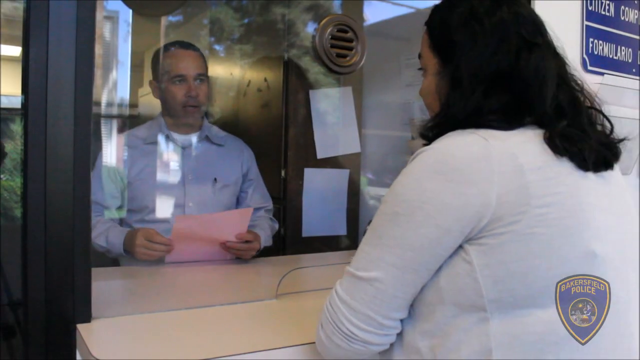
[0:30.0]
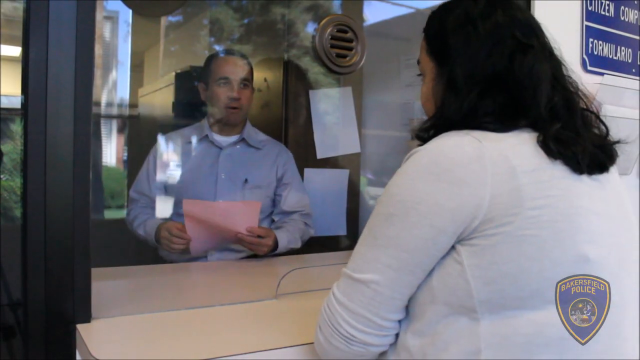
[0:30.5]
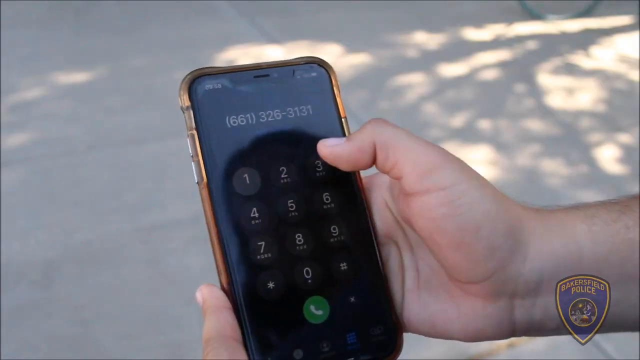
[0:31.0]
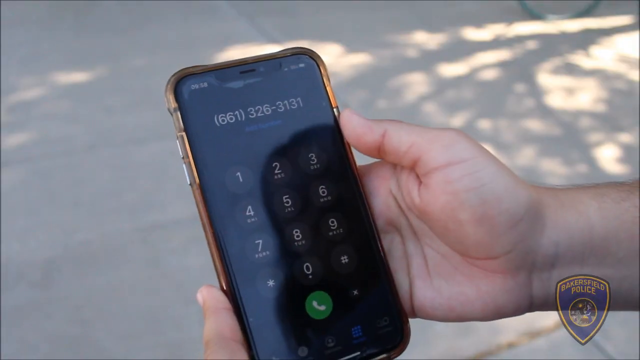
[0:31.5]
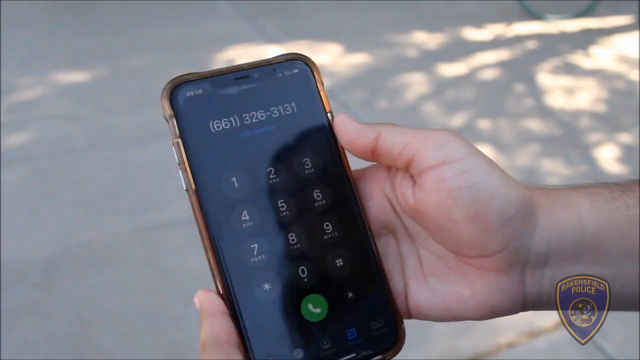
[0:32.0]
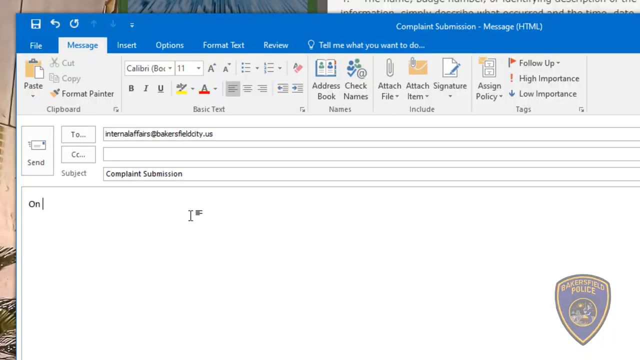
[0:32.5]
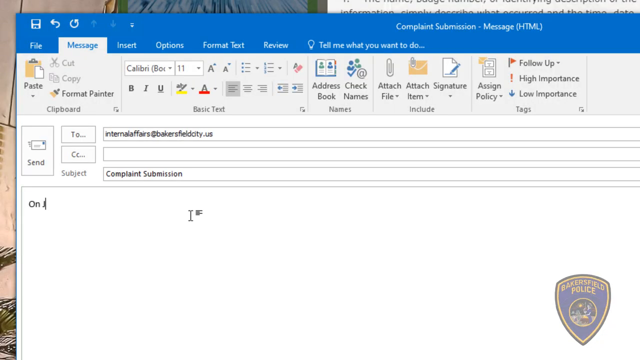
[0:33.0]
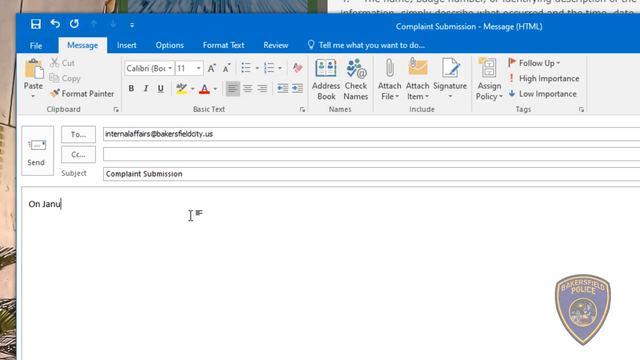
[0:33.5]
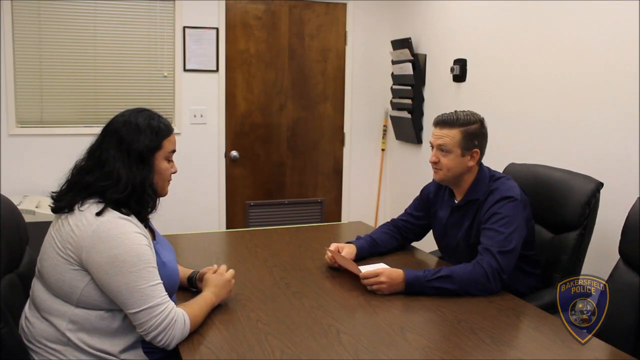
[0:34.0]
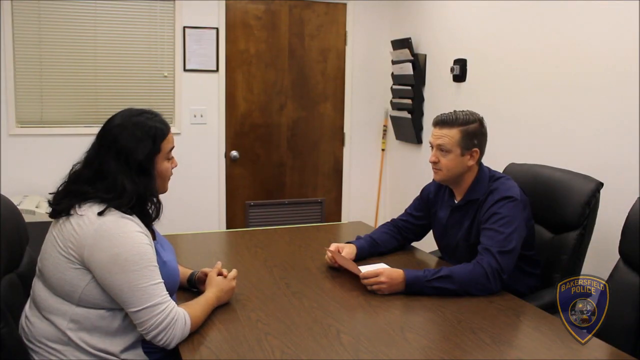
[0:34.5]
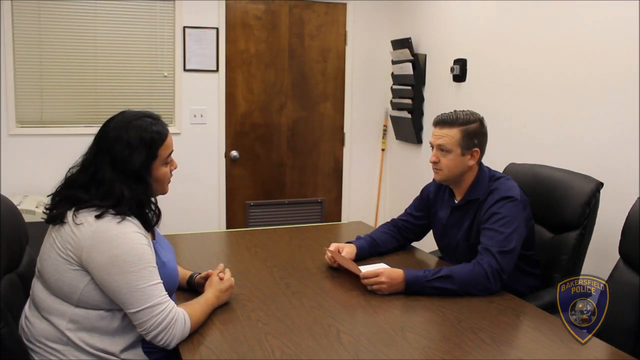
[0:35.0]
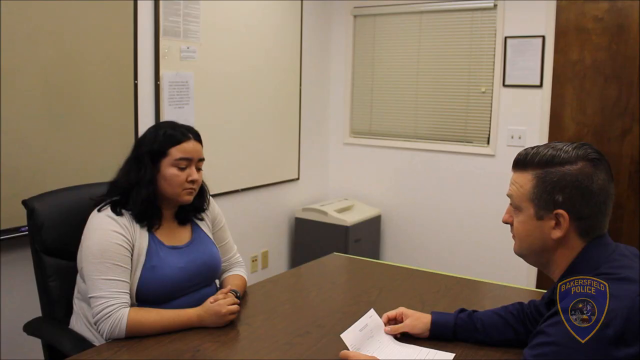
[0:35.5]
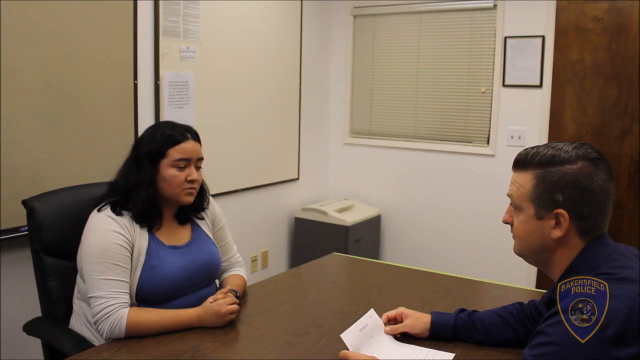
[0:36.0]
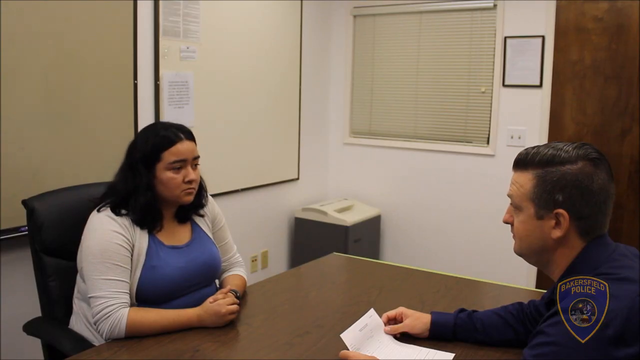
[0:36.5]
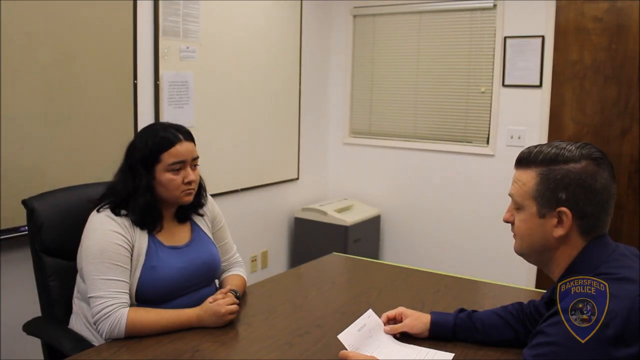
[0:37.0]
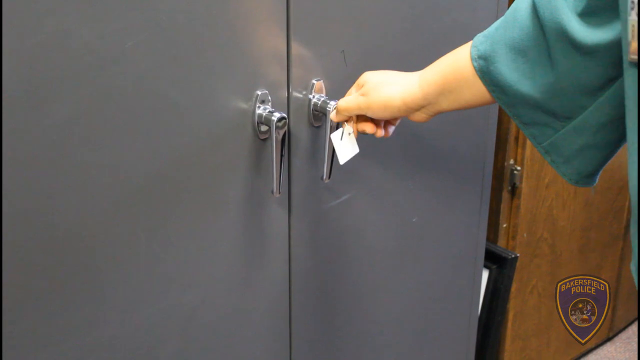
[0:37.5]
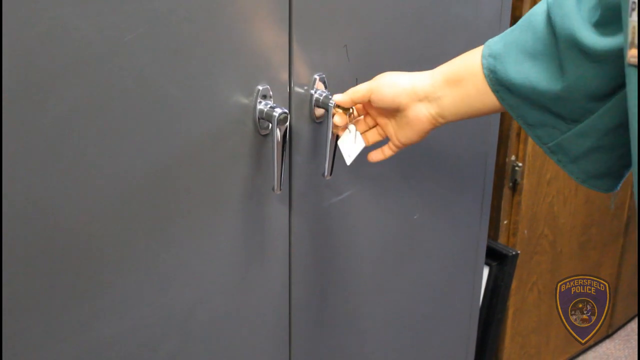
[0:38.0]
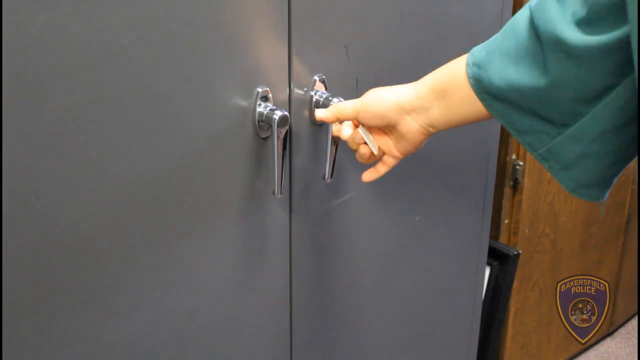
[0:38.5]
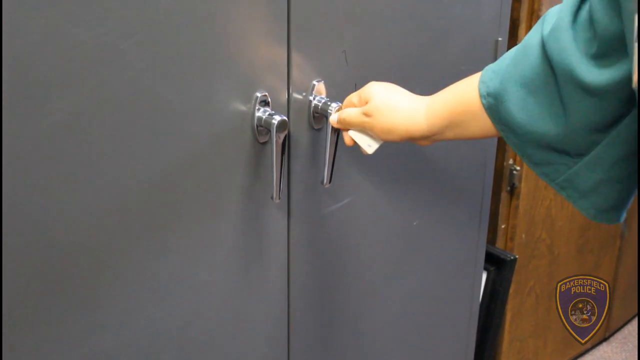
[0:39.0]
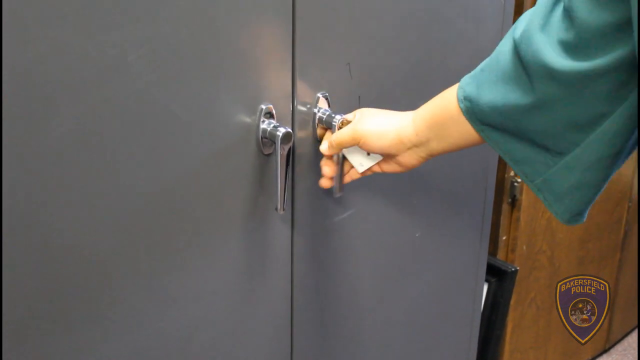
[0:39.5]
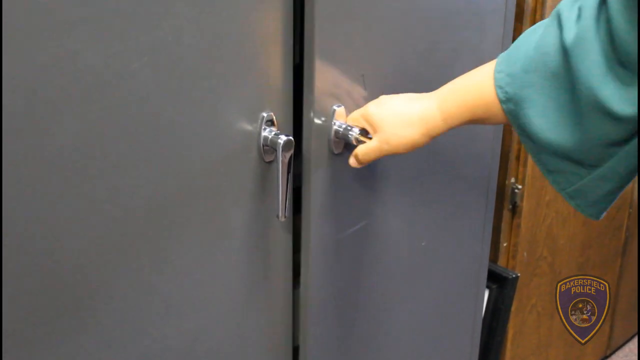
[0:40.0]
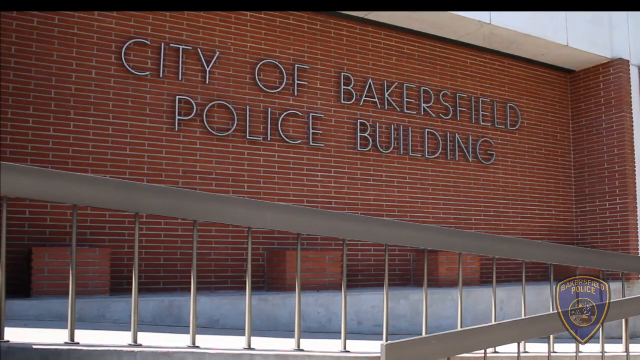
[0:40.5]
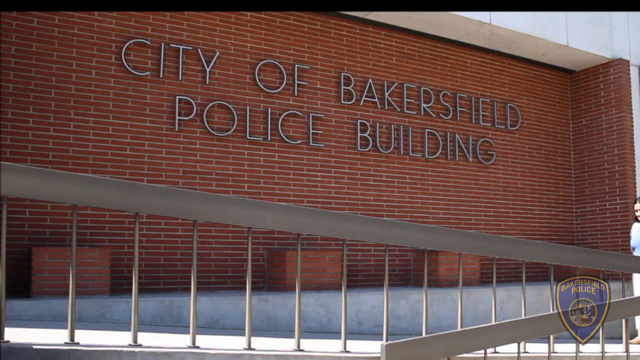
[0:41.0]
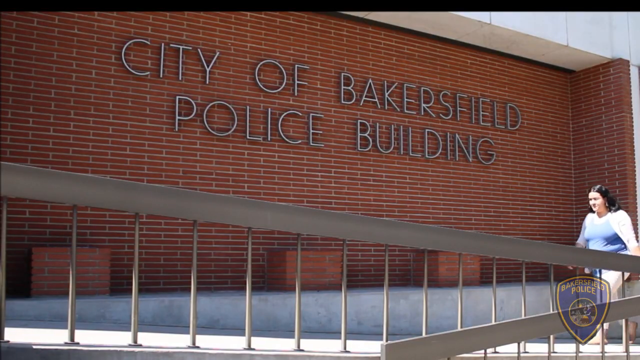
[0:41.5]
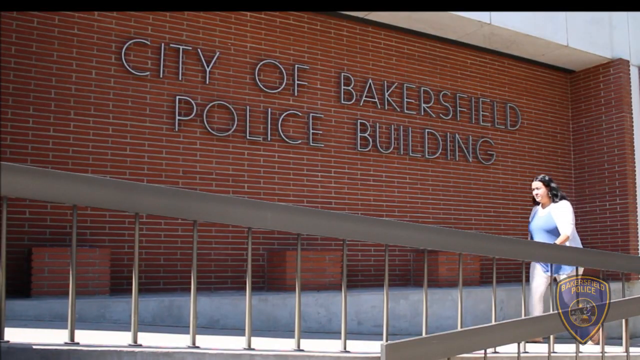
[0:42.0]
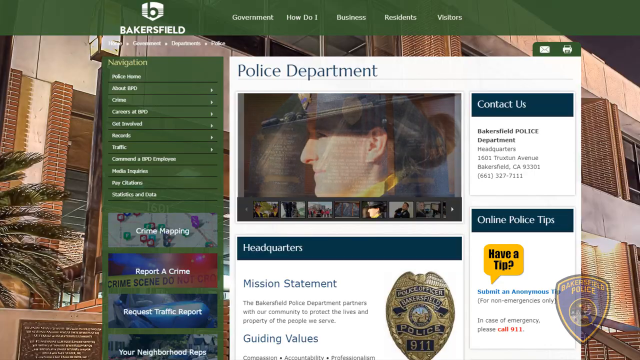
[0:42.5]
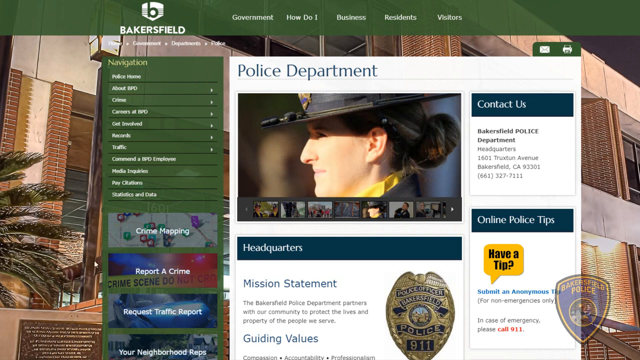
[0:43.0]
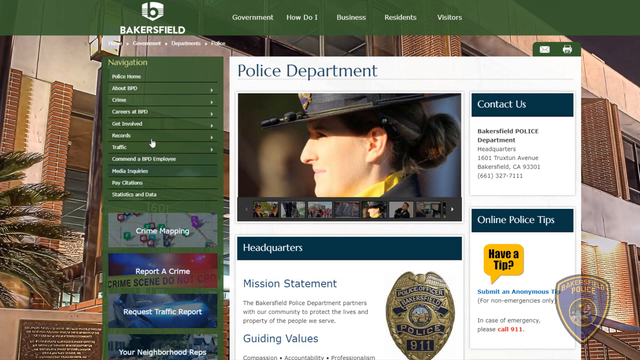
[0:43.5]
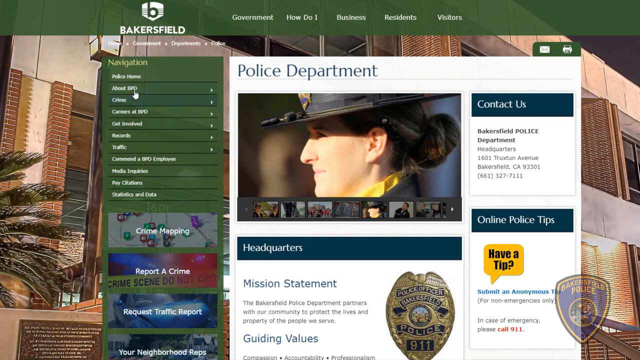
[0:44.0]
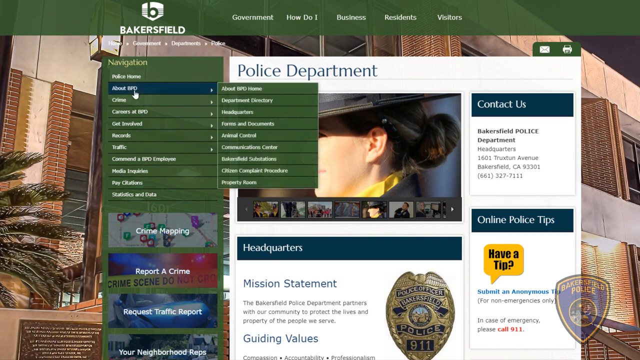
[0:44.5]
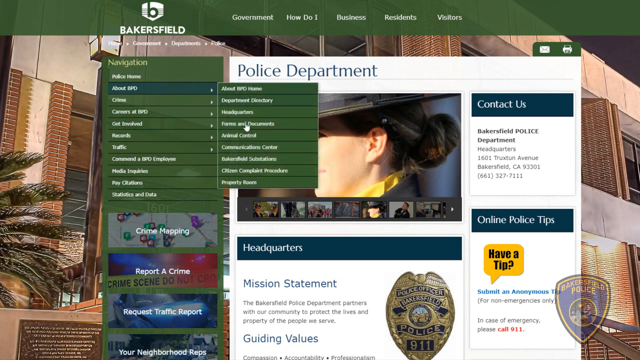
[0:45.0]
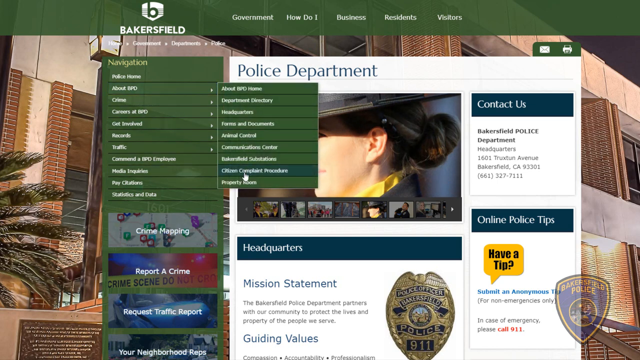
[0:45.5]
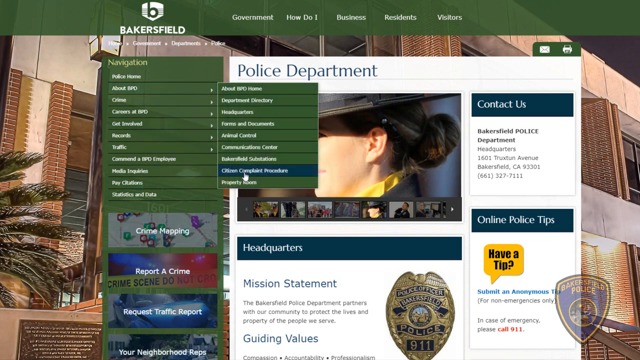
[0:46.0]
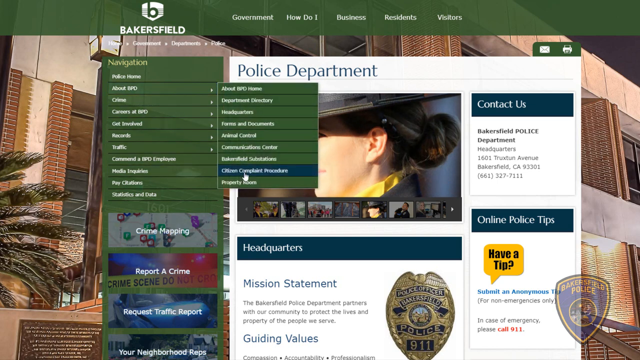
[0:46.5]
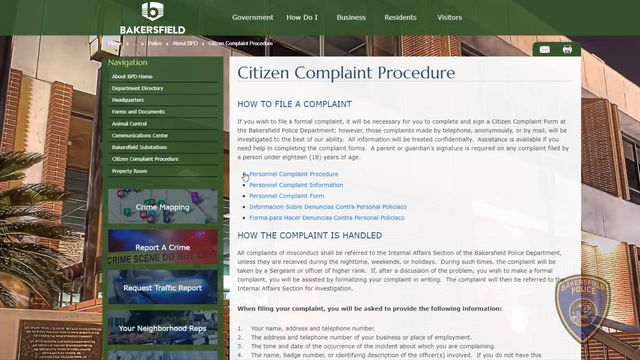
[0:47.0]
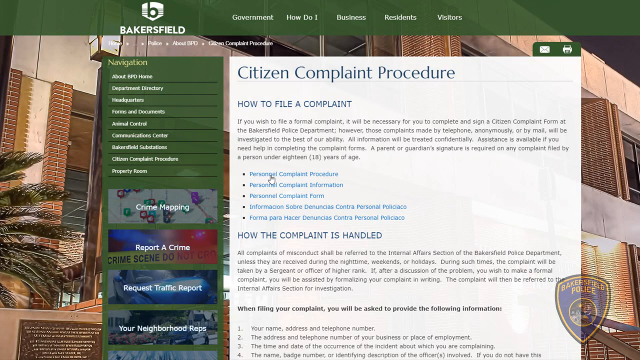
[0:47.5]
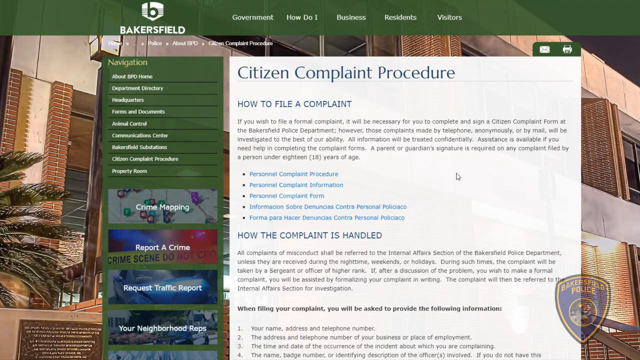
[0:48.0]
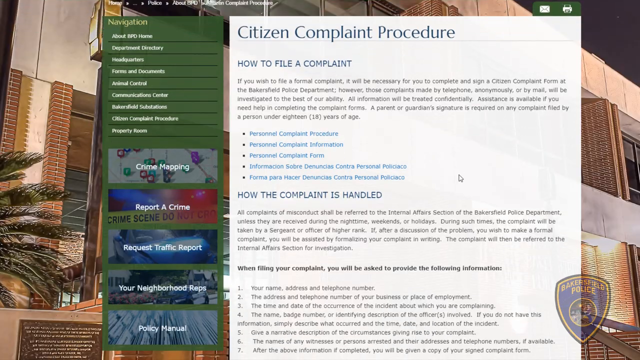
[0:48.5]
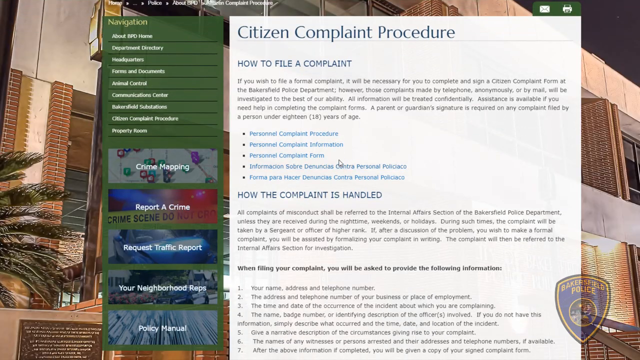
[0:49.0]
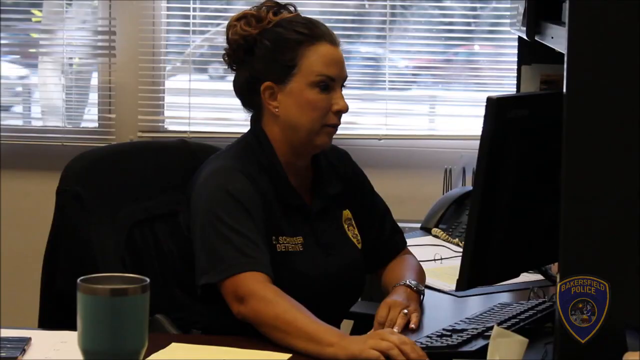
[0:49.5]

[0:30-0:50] Someone holds a cellphone that looks like some sort of iPhone, with the phone number 6613263131 at the top. A blank computer email form or message then pops up, addressed to "internal affairs at Bakersfield City US", with the subject "complaint submission". The video then goes to a man and a woman sitting across from each other at a brown desk. The man wears a blue shirt and holds a paper in his hand; the woman wears a sort of white jacket and a blue shirt. Information then appears from what is apparently the Bakersfield Police Department website. A navigation field includes "police home", underneath that "about BDP", and under that "crime", "careers", "get involved", "records", "traffic" and more. A way to contact the department is also shown.